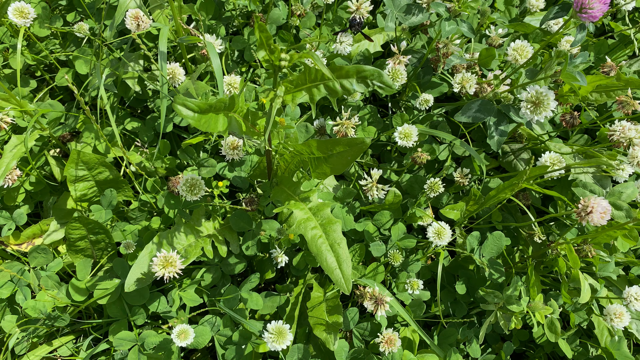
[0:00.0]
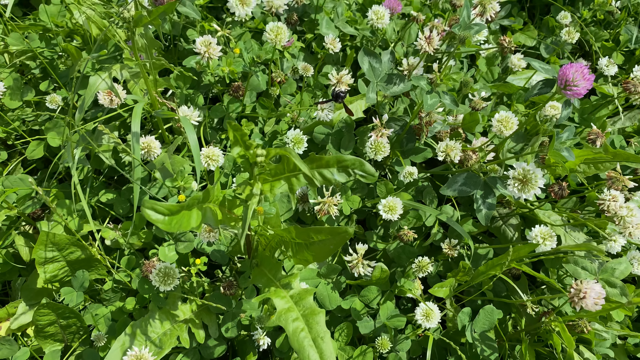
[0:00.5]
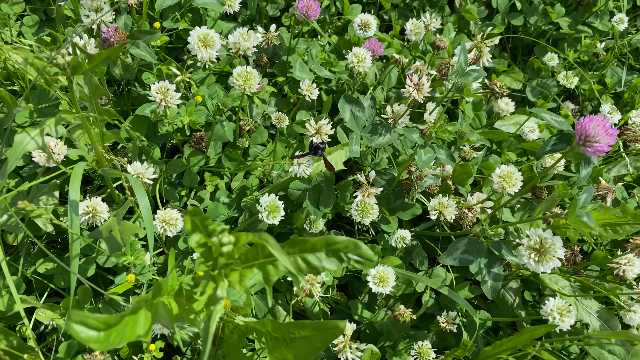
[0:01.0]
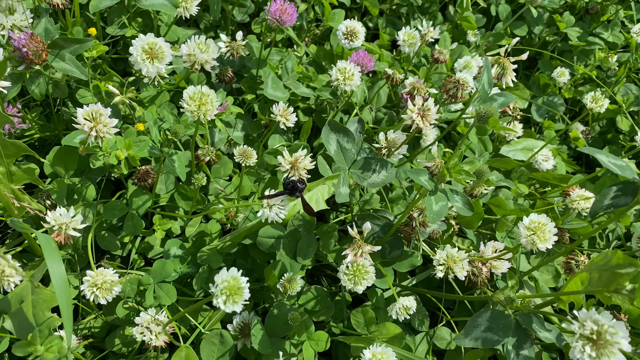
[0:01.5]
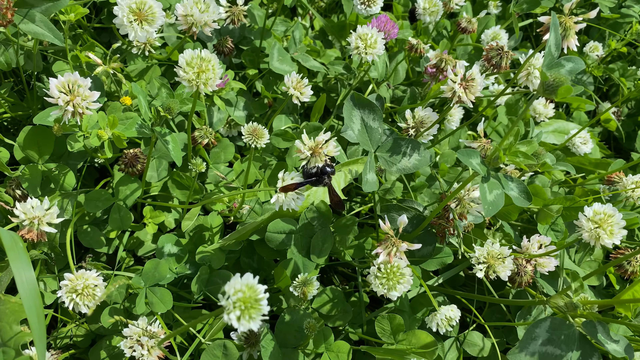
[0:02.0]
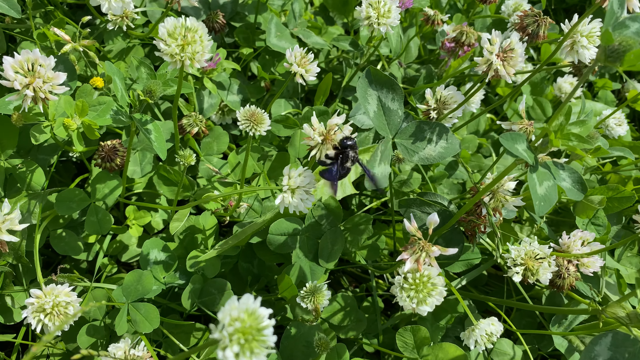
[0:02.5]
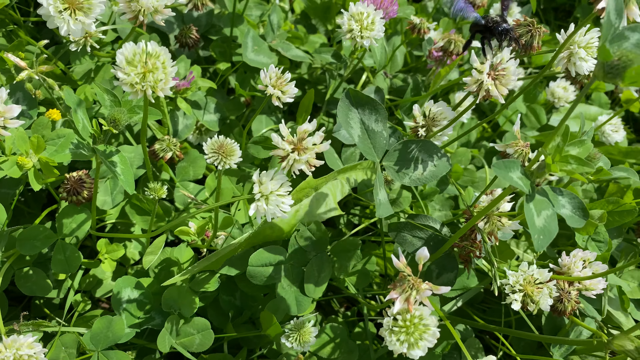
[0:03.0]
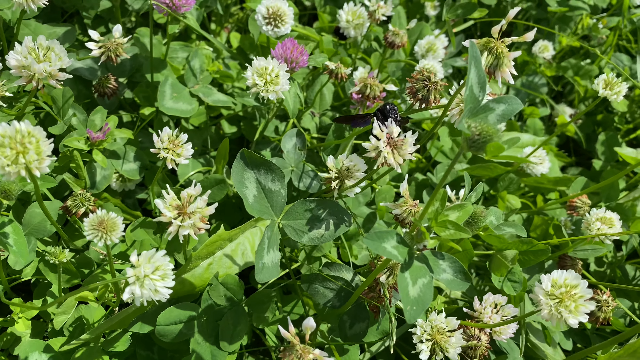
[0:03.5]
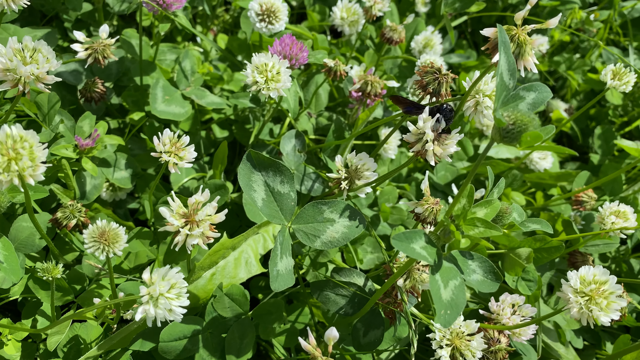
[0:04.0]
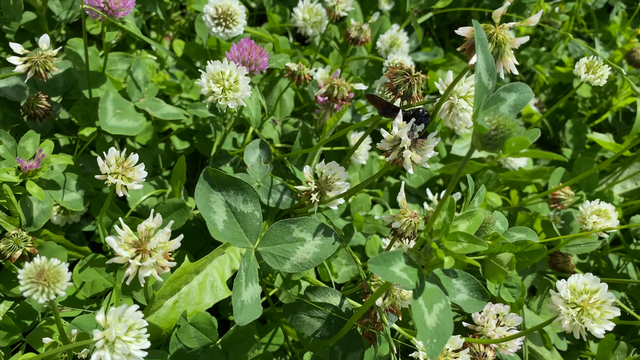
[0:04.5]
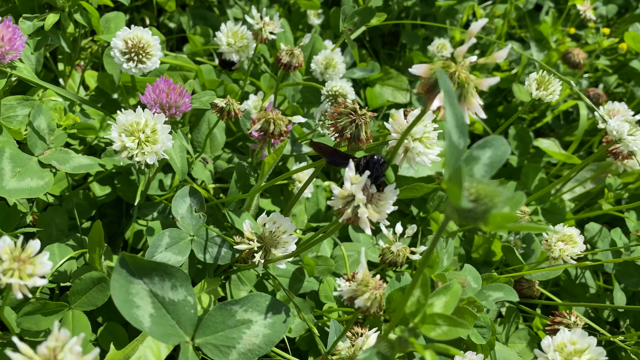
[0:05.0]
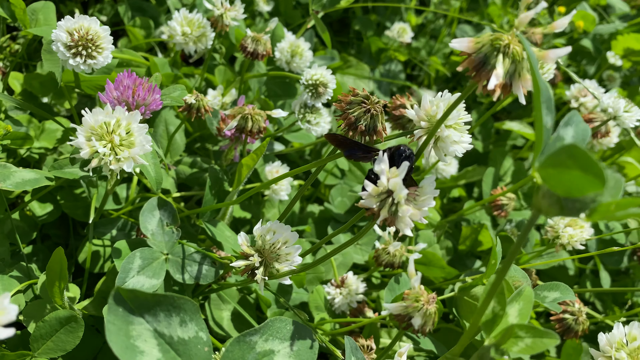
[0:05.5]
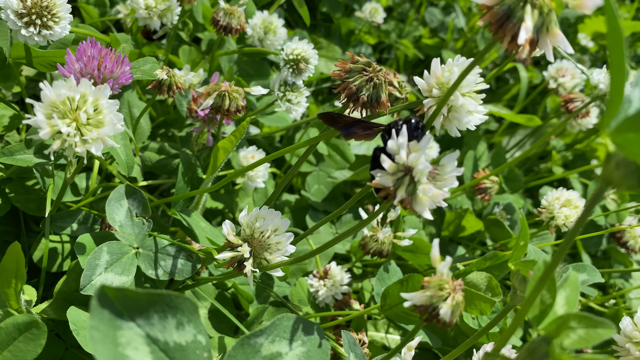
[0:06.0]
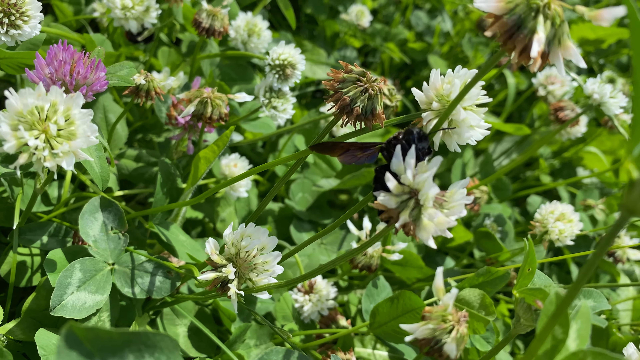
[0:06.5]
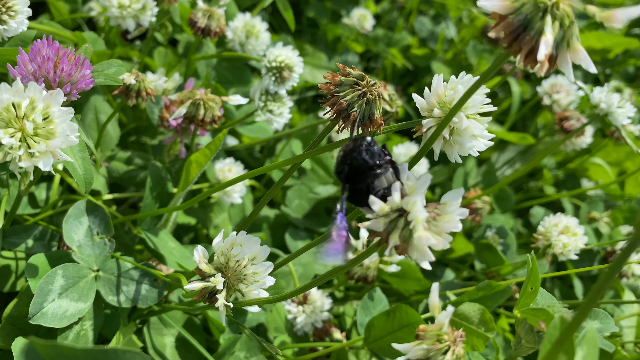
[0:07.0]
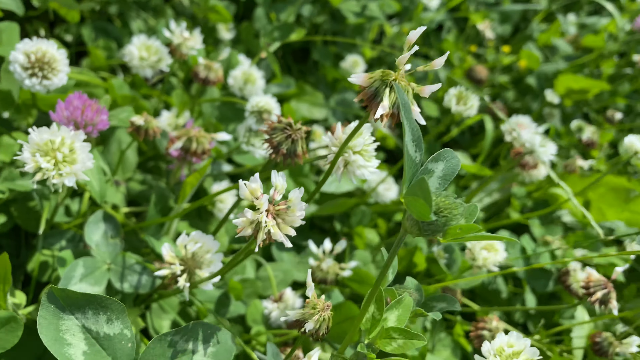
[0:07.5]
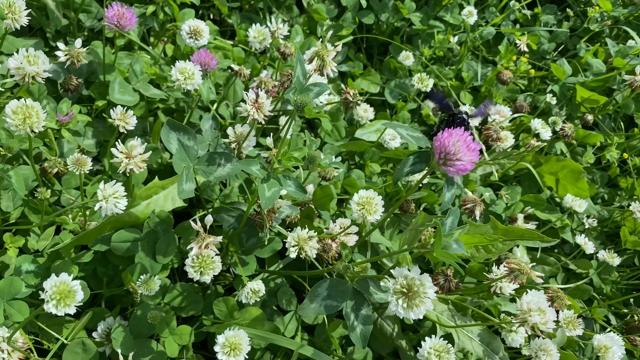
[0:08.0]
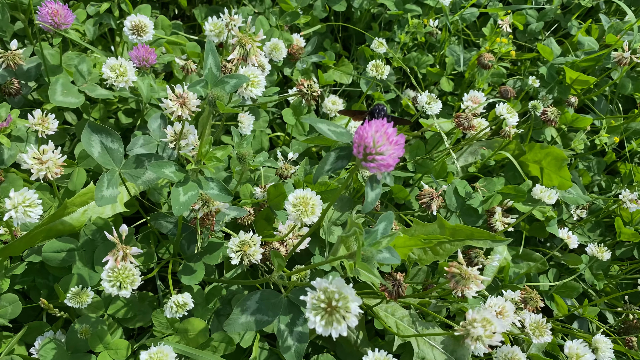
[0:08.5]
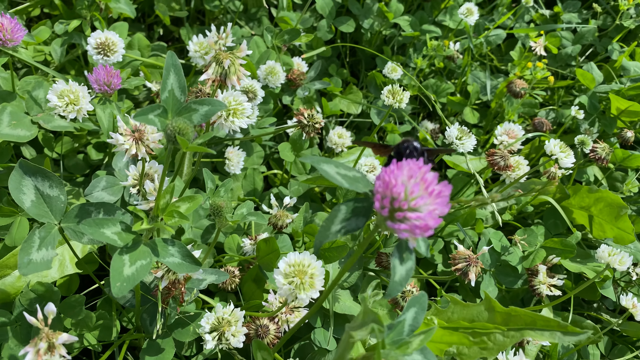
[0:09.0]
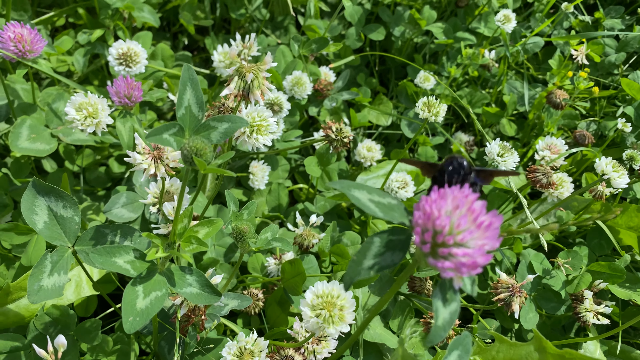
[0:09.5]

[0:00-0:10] In a wildflower garden, a dark bumblebee has landed on the flowers and is collecting pollen. Most of the flowers are white with yellow centers, but there are also some purple wildflowers growing among them. The bee is completely black, both its body and its wings, but it does look like a bumblebee. The garden looks very healthy. Some of the flowers look more mature and appear to have turned into purple flower buds.